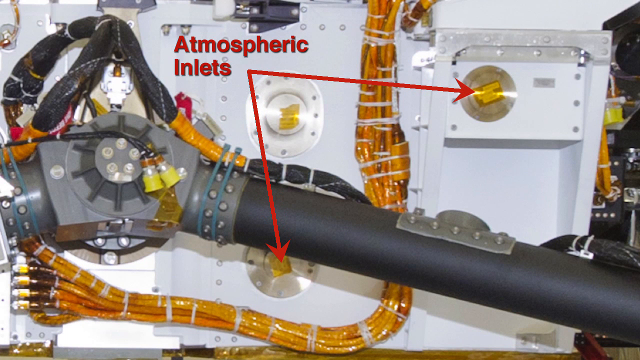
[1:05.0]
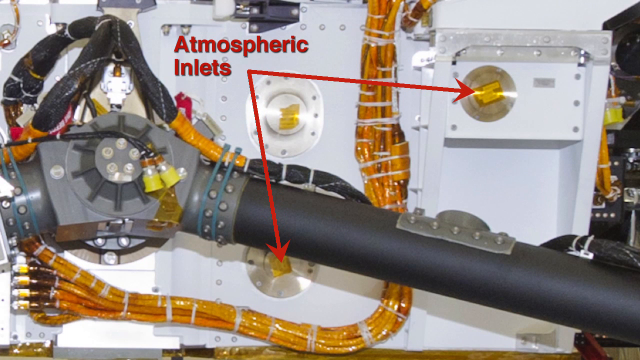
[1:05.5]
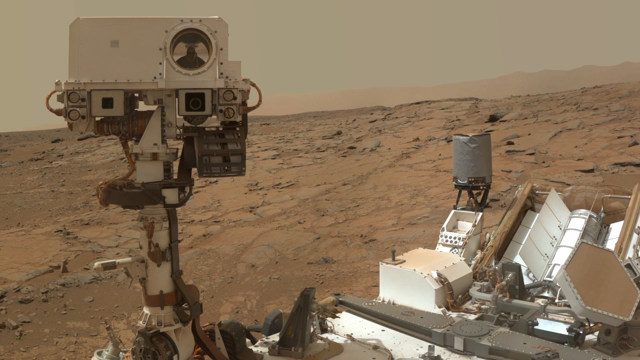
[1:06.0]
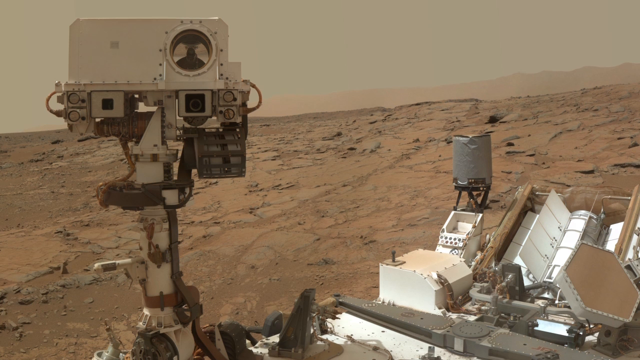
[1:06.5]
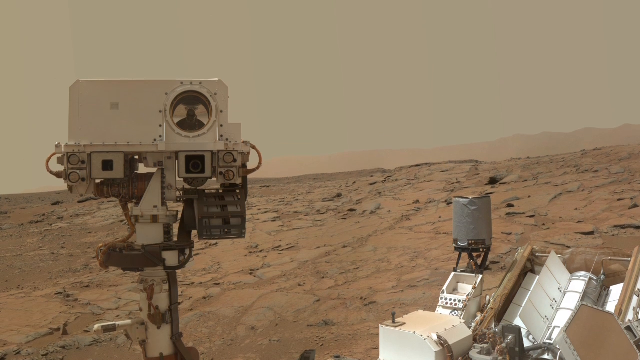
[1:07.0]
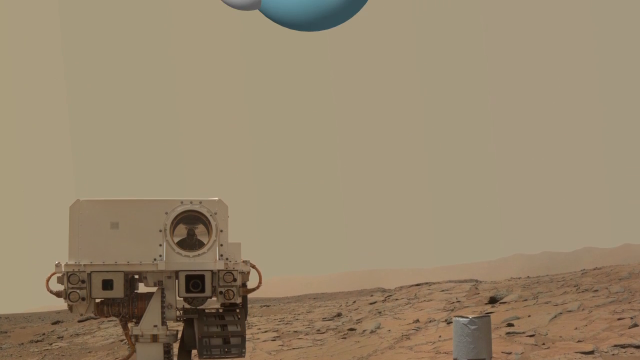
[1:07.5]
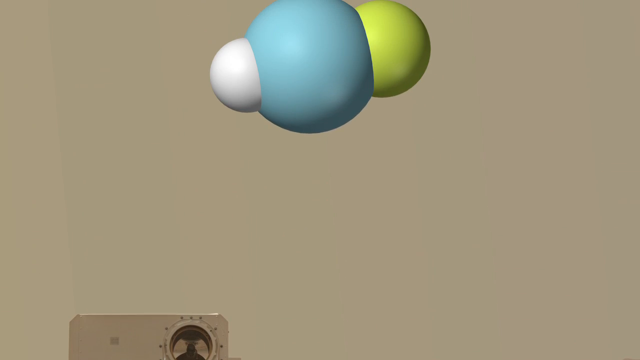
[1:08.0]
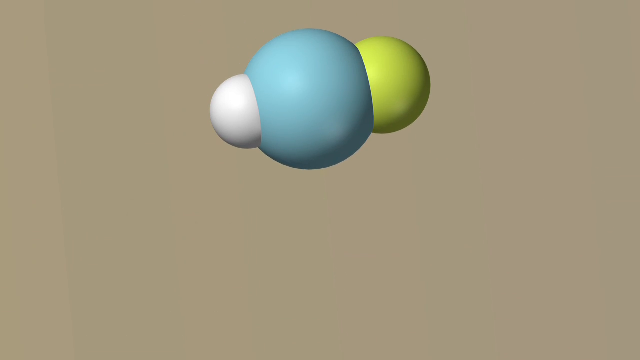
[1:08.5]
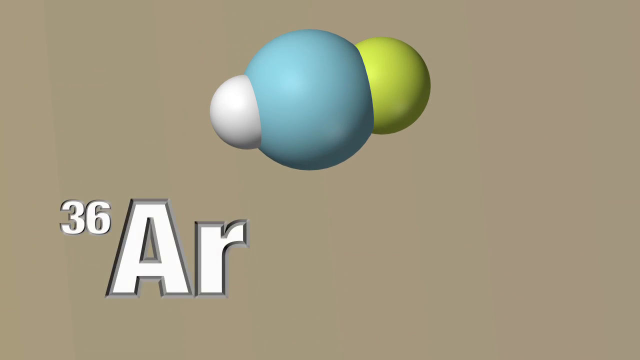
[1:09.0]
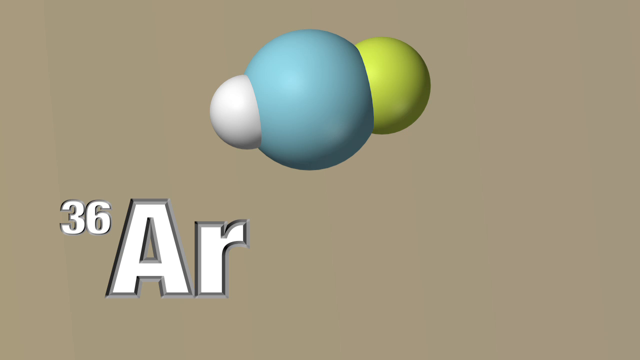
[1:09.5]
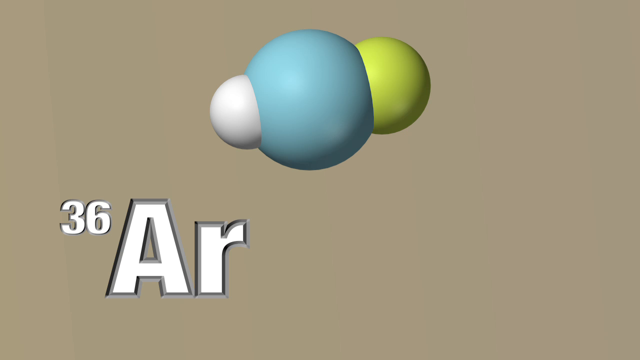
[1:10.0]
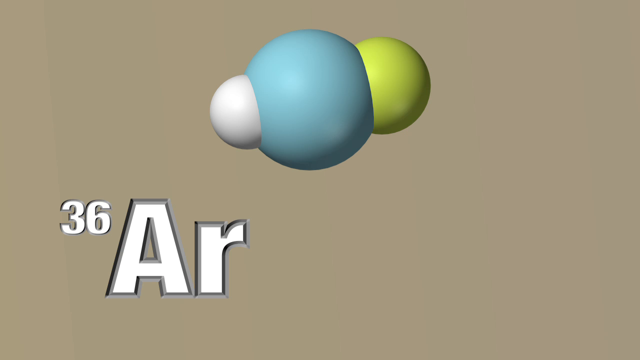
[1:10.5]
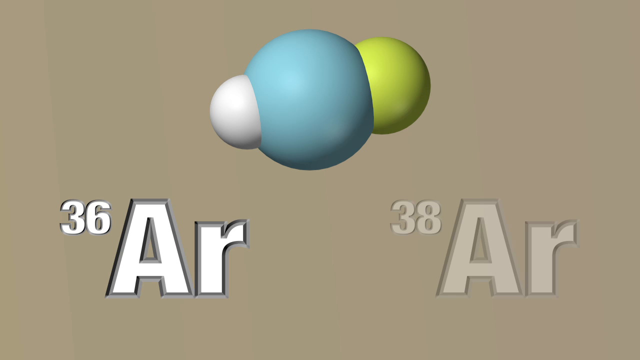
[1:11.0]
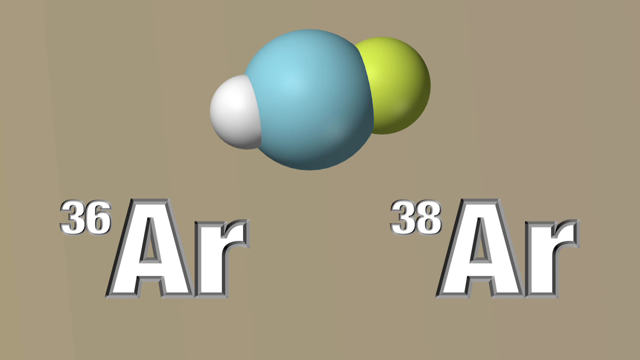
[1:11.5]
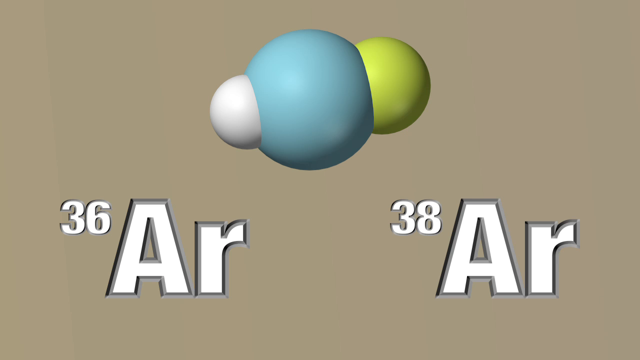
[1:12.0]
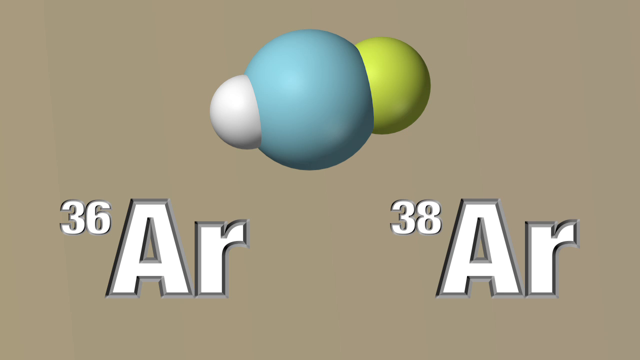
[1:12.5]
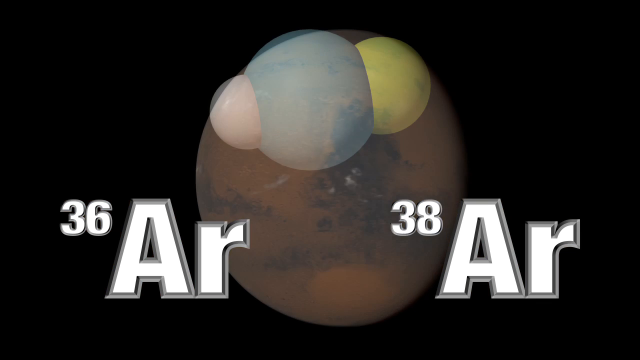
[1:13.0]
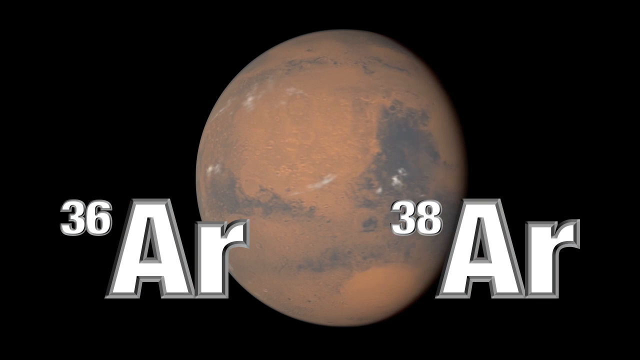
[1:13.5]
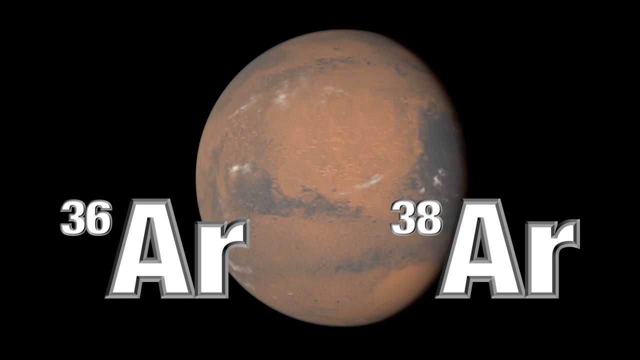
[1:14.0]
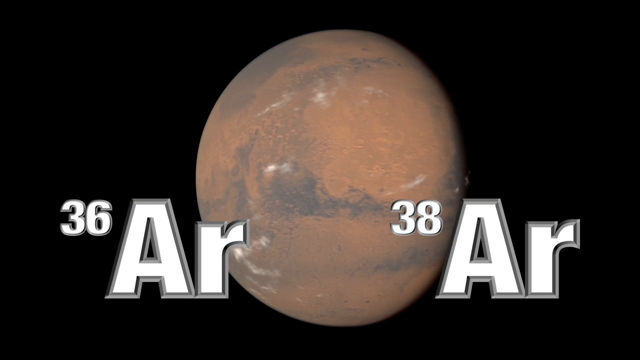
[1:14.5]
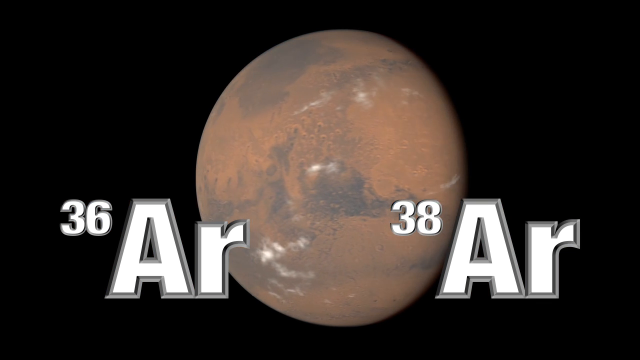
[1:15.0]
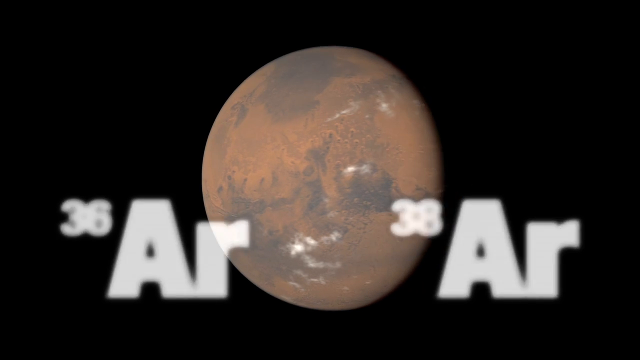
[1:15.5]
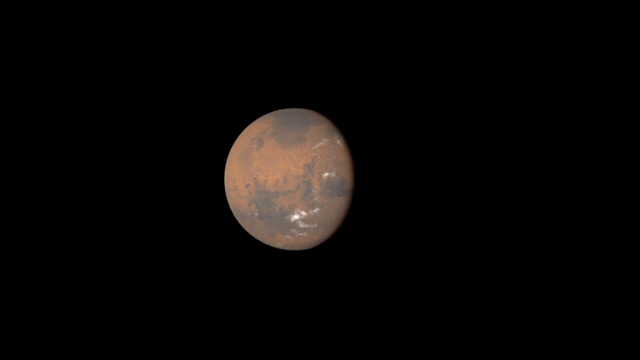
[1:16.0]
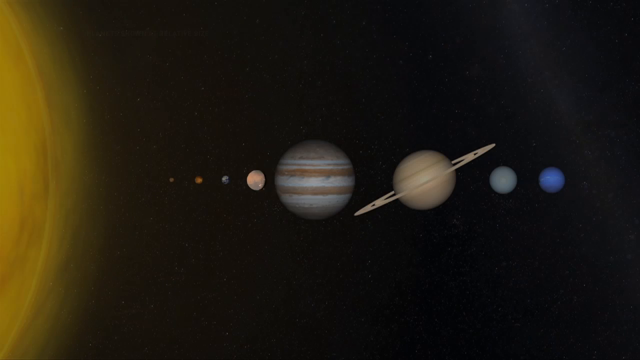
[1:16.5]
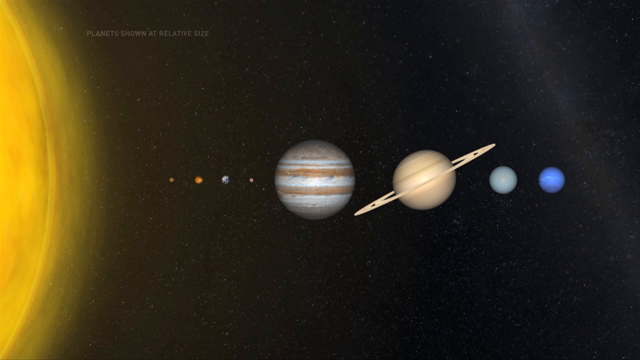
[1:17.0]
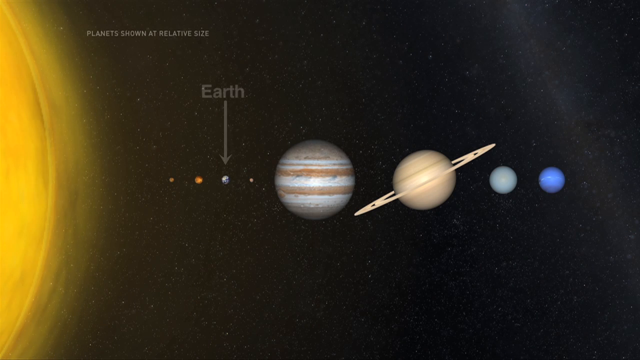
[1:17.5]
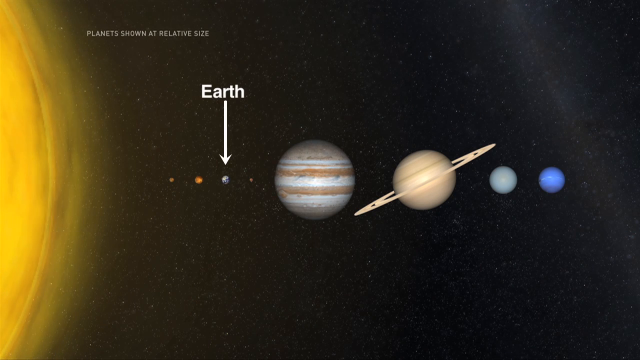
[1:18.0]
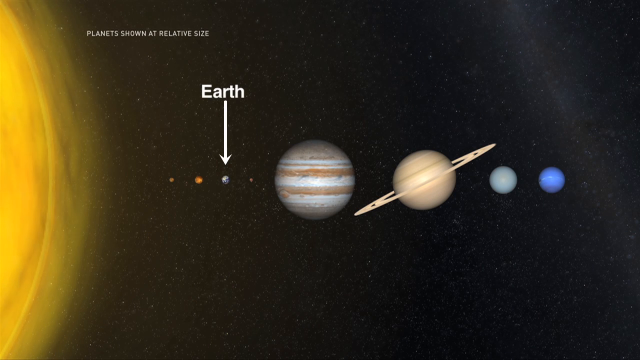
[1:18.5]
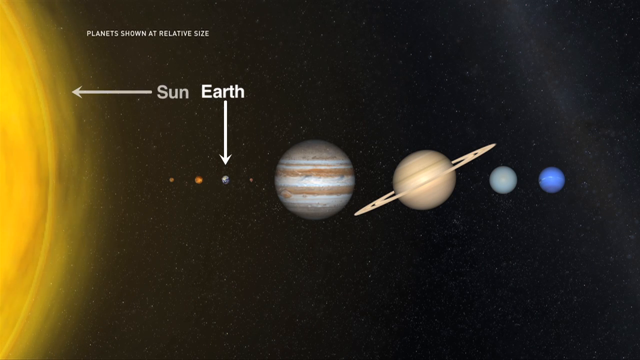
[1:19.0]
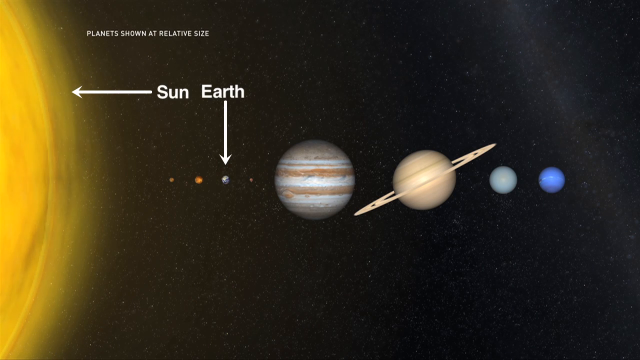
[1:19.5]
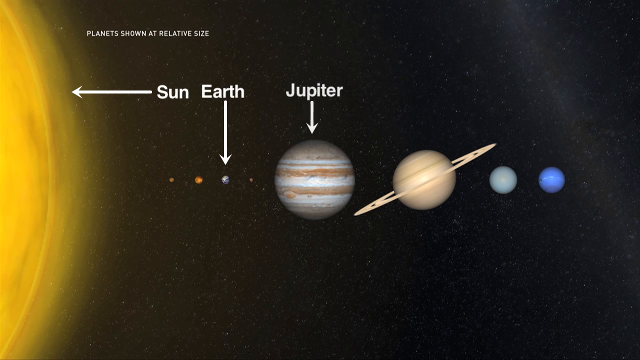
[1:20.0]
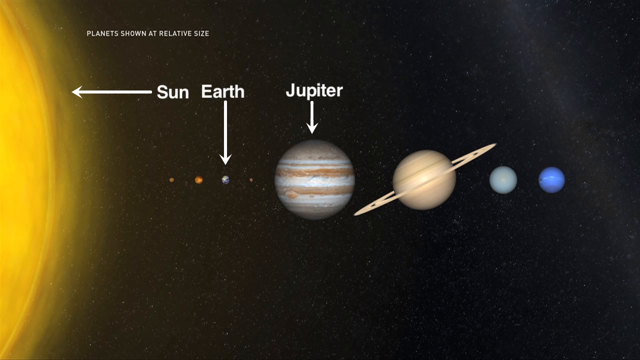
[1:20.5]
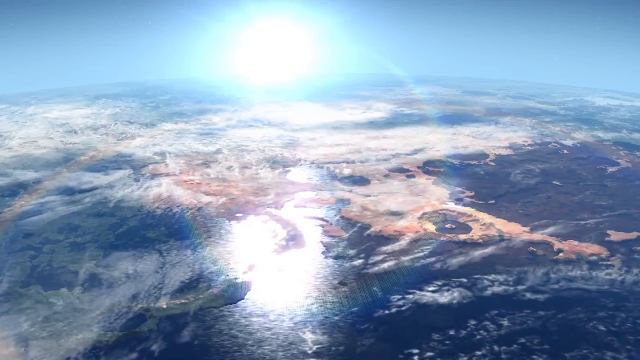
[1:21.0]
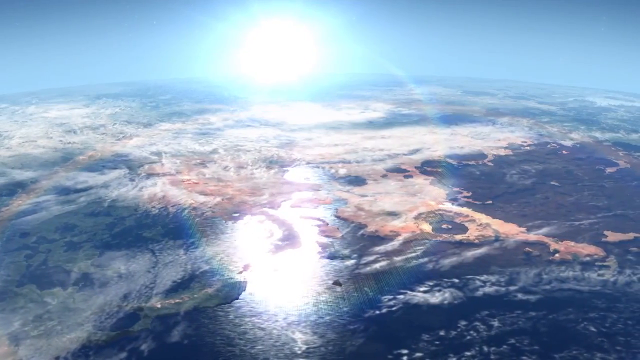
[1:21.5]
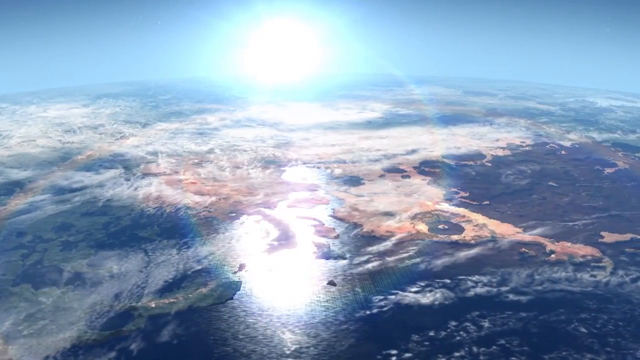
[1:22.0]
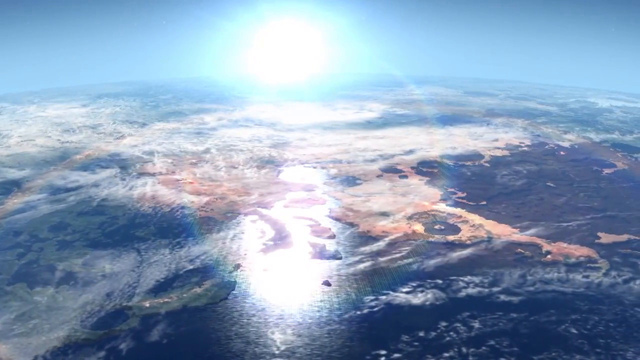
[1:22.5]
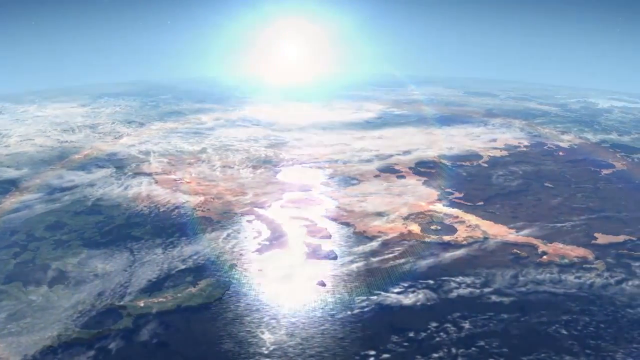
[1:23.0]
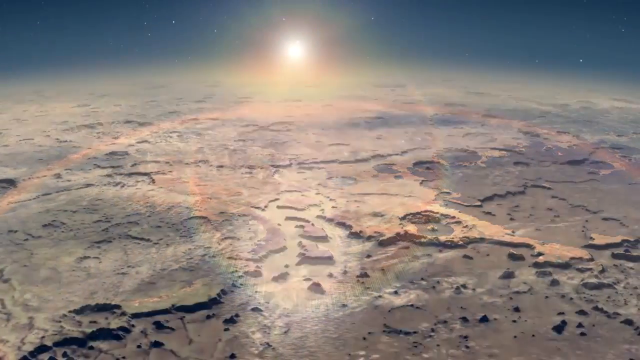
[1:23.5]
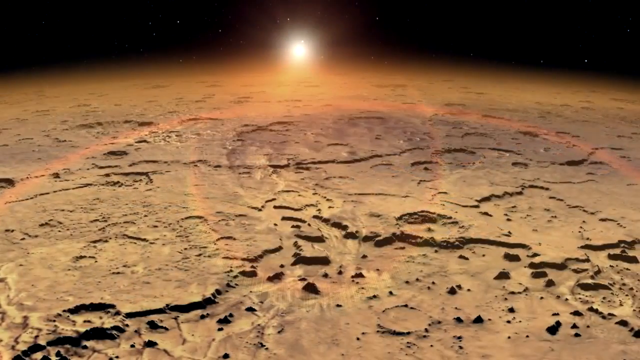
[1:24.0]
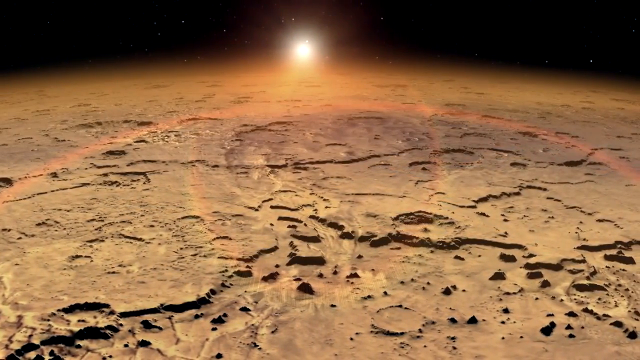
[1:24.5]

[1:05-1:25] The scene switches from the rover inside the facility back to Mars, with the camera in the top left corner, the top of the Mars rover in the bottom right corner, and the soil of Mars in the background. The camera pans upwards to what looks like a 3D model of a chemical compound, with the text "36 AR" and "38 AR". The background image flips to the whole planet Mars, spinning. Then an image of the solar system shows the planets in relation to each other and the sun, including where Earth and Jupiter are located in reference to the sun. A completely different image follows of what looks like the top of the Earth, with blue water, some land and white clouds. The scene then switches to what looks like the top of Mars, all red and dust covered.